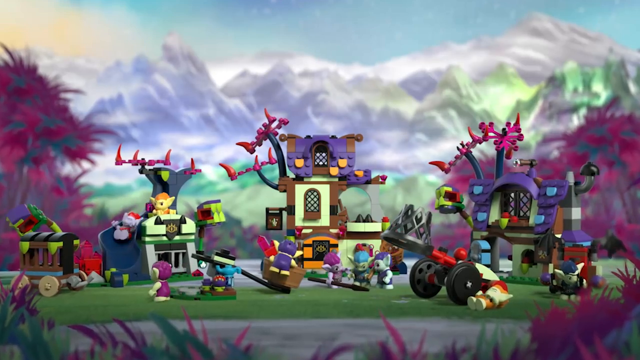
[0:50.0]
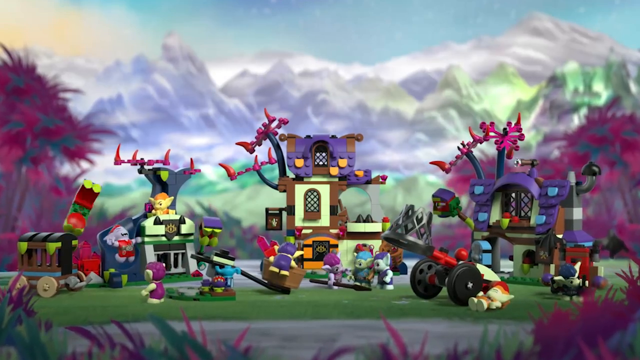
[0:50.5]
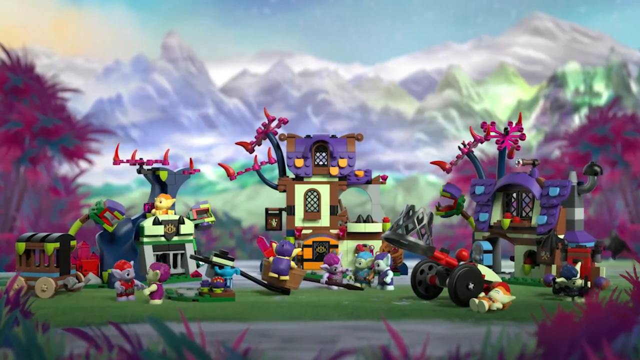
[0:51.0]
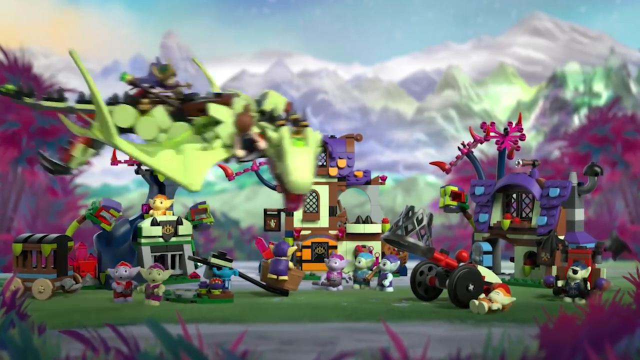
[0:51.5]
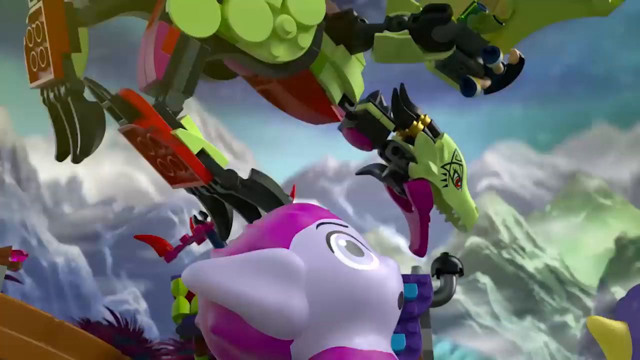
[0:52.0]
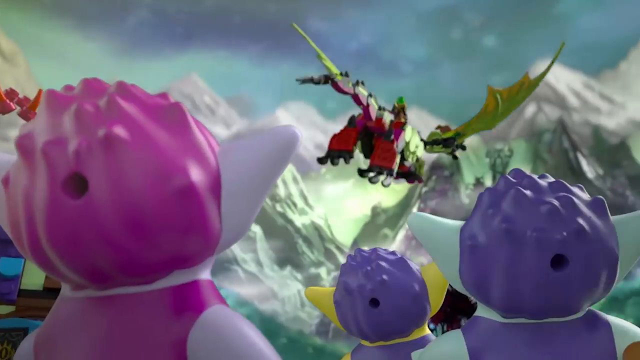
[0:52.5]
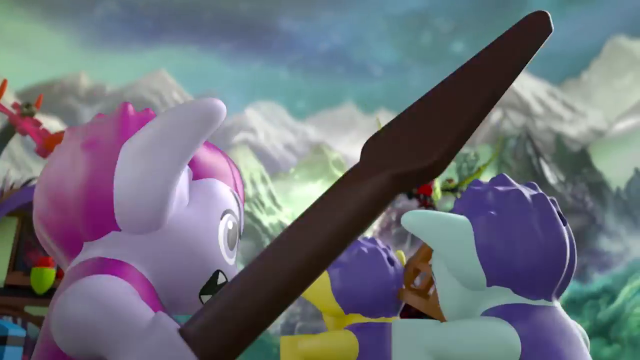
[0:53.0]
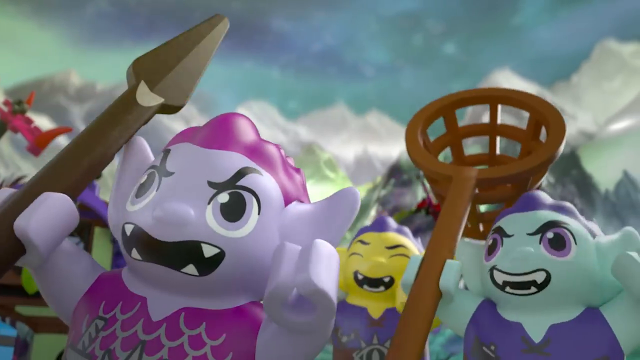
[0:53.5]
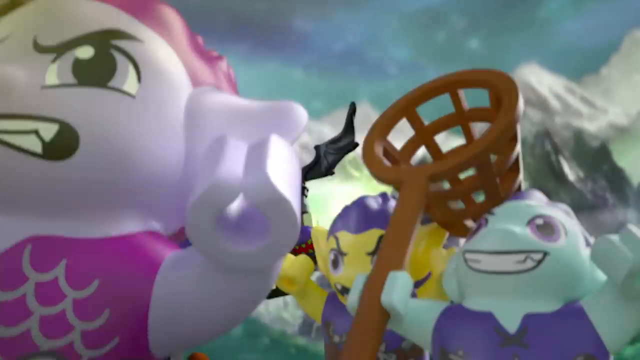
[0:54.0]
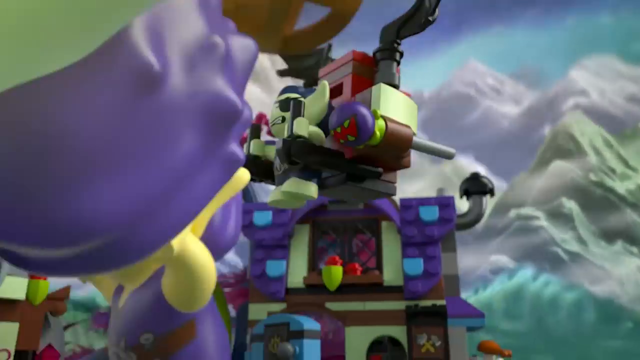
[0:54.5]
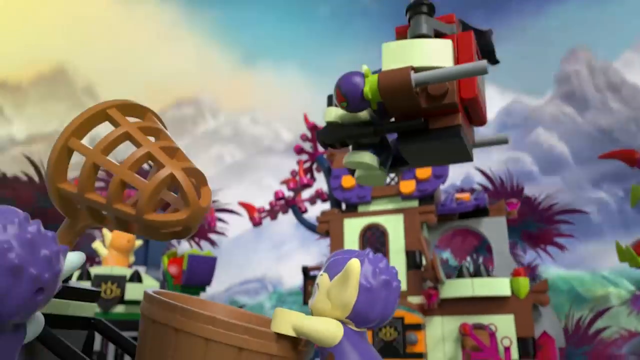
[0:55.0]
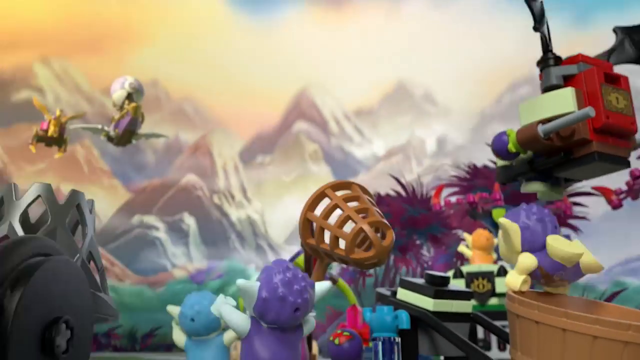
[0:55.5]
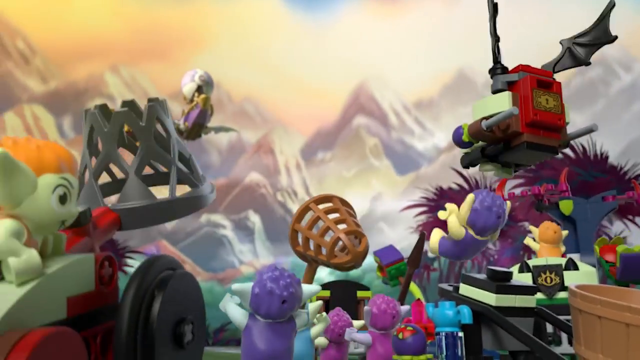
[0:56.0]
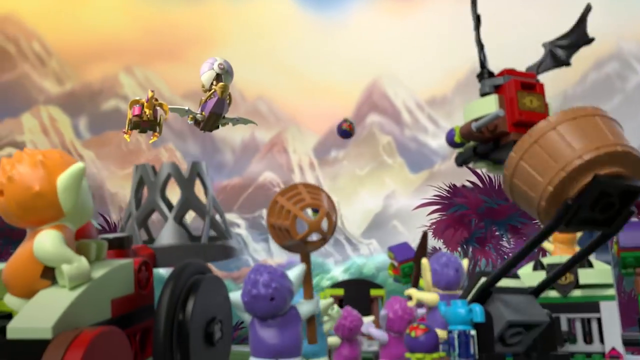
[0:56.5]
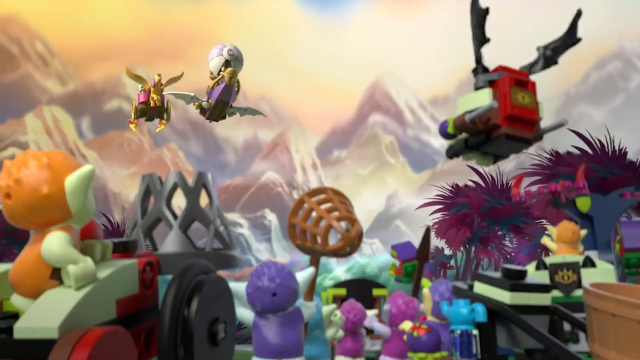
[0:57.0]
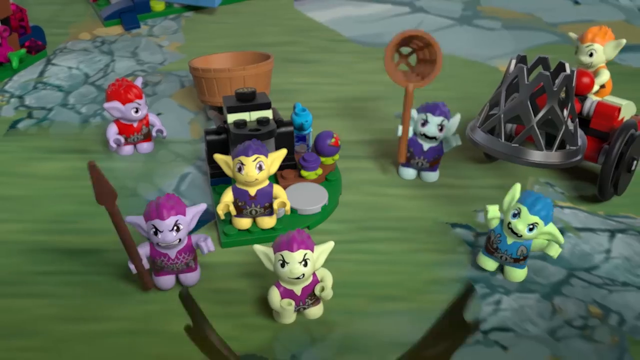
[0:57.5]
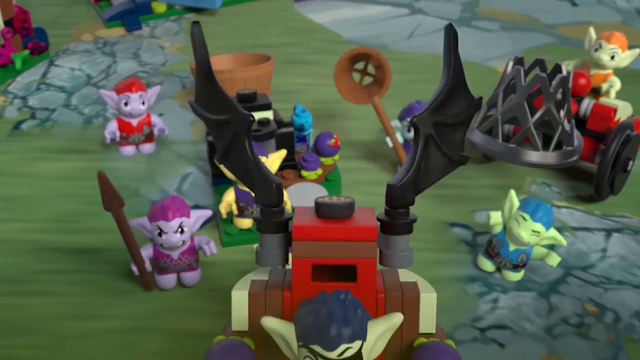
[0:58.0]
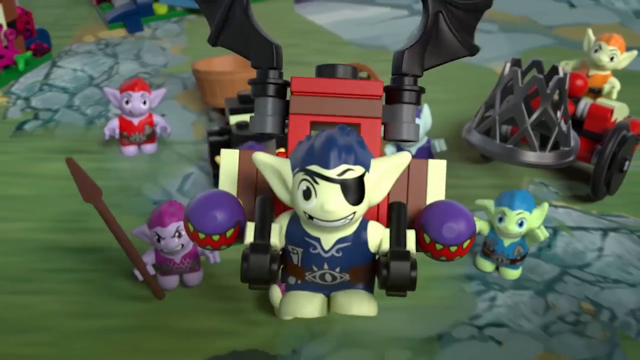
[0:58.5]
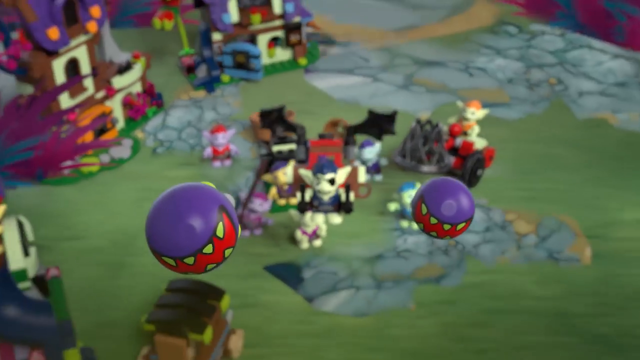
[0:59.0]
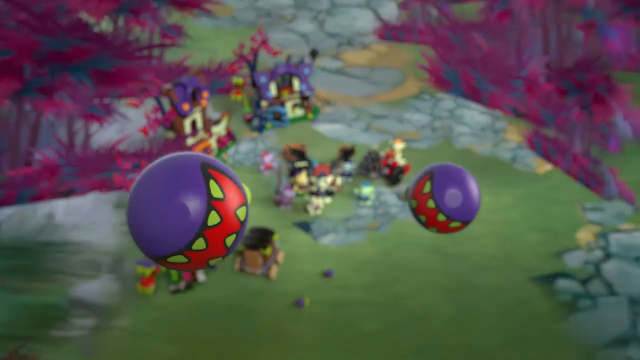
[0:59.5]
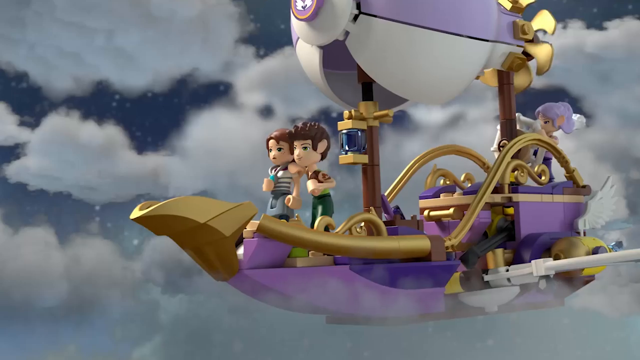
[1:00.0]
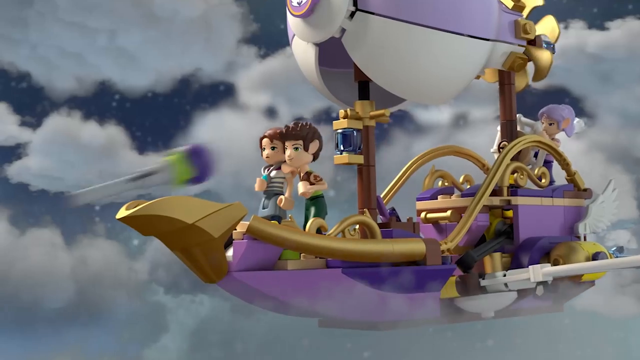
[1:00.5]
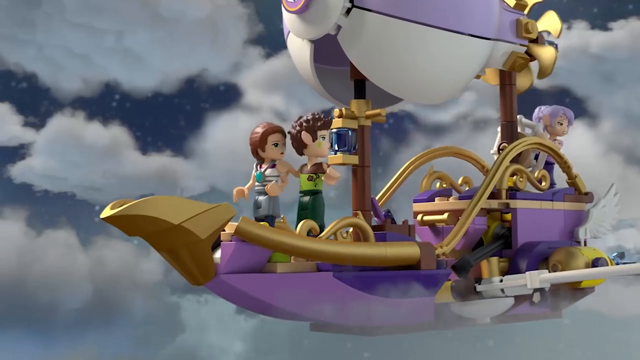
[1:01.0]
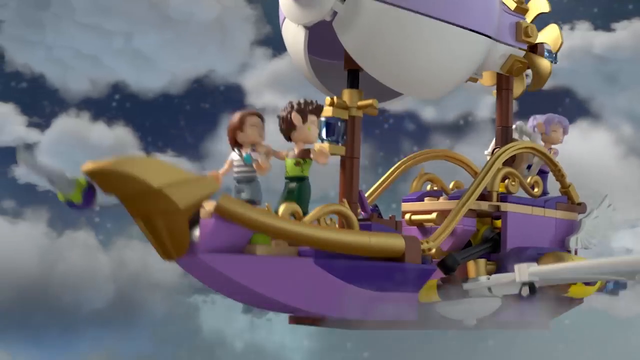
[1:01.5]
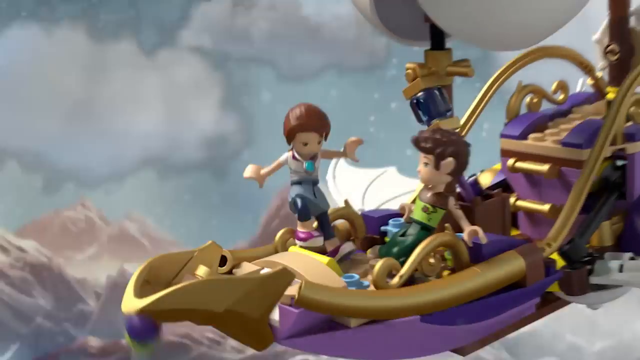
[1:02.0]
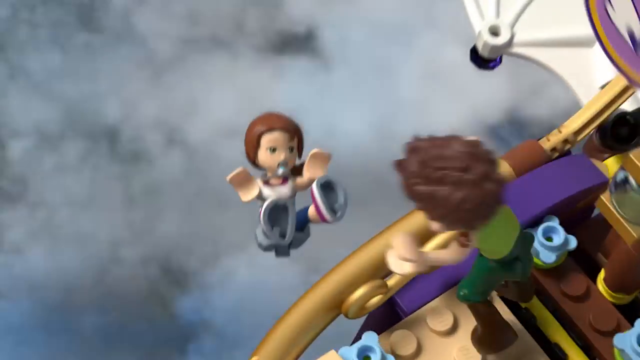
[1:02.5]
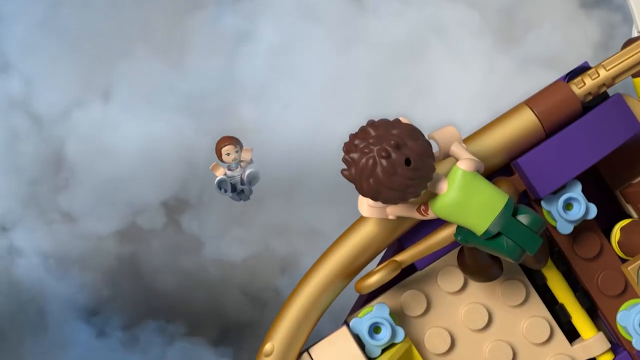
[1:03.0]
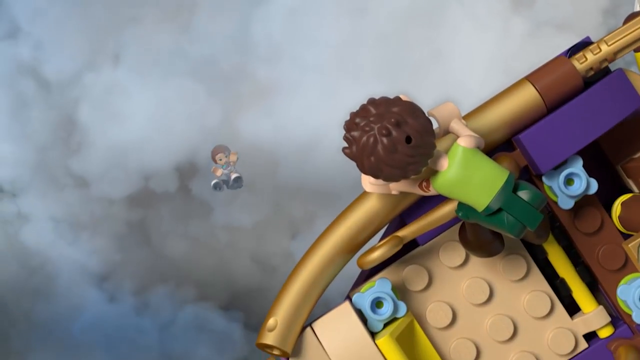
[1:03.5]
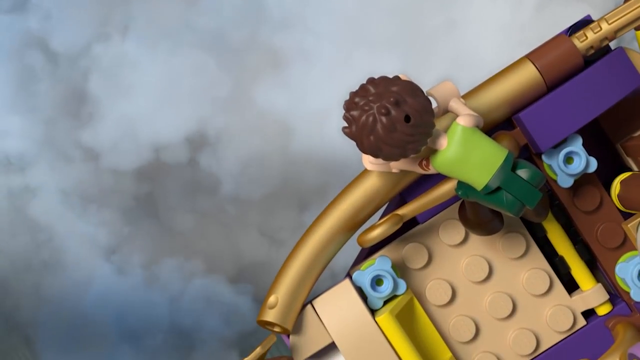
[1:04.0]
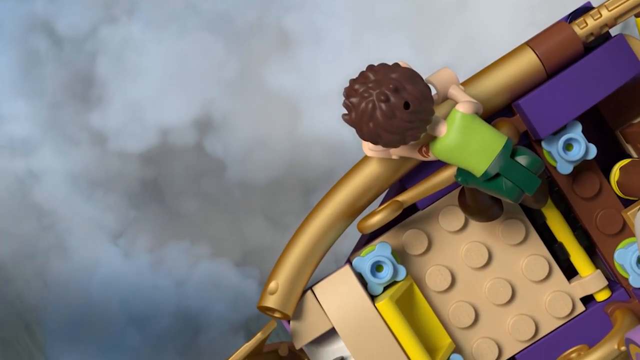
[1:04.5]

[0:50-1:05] A scene shows what looks to be a kind of evil village, apparently made up of little goblins. There are about three little goblin houses. The goblins, or trolls, are light green, light blue, and purple, with hair of various colors, and they are also made of Legos. The witch on the dragon flies and swoops past them, perhaps giving them an order. The goblins raise their weapons to the sky, look at the approaching hero group, and start throwing rocks and shooting little bombs at it. One hits the airship and rocks it just enough that the girl with brown hair falls off. As she falls, the pilot of the ship, a young man with brown hair, looks concerned and reaches out for her while she descends into what looks to be clouds.